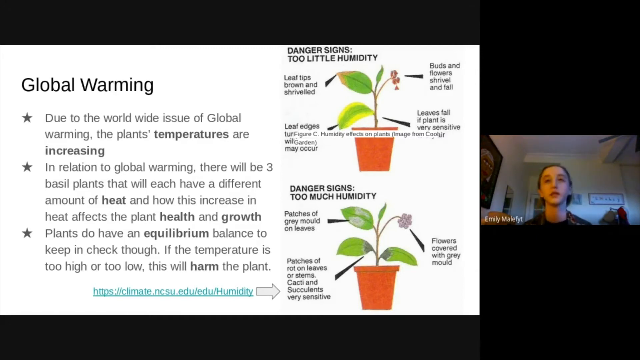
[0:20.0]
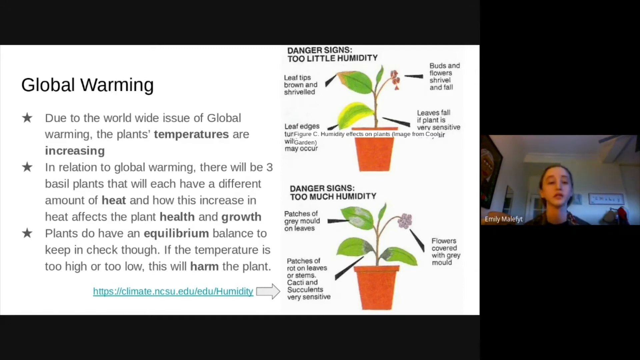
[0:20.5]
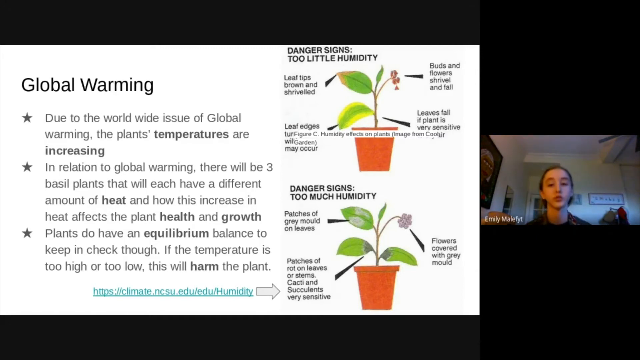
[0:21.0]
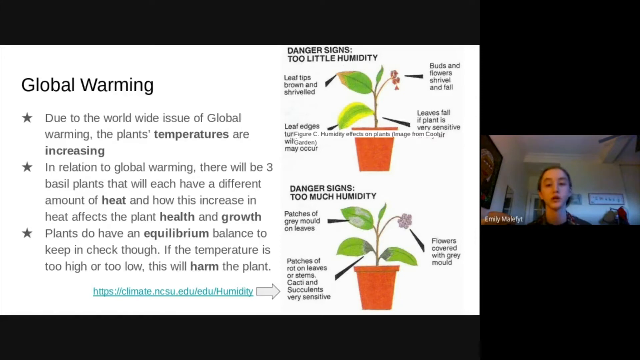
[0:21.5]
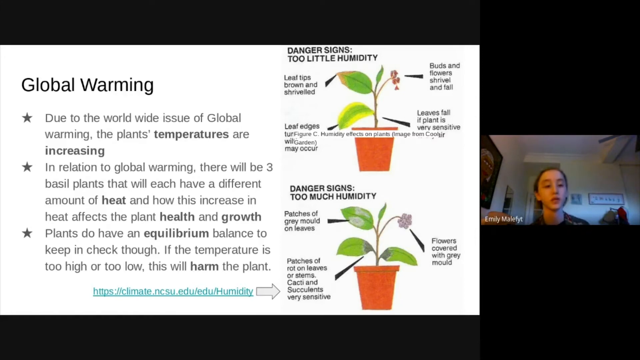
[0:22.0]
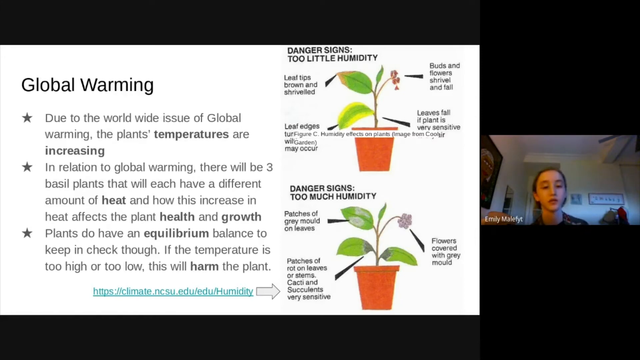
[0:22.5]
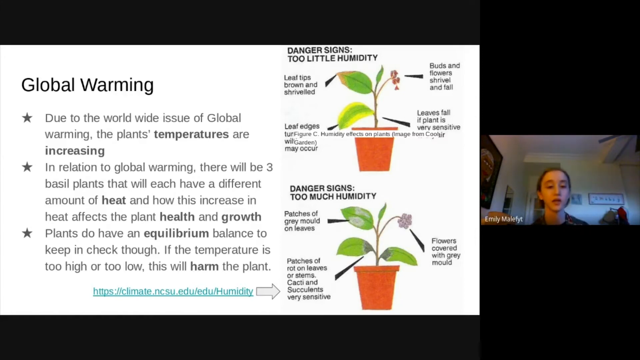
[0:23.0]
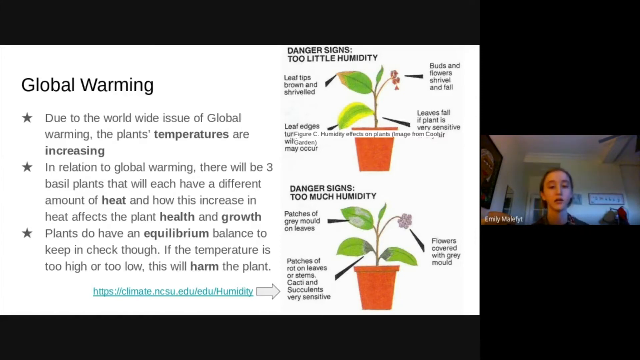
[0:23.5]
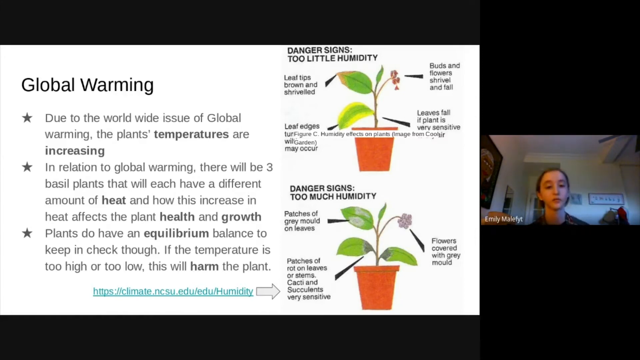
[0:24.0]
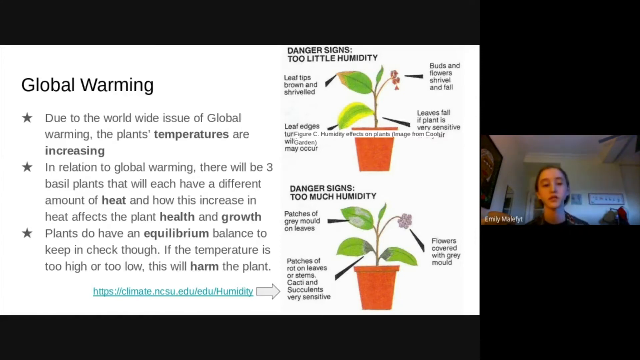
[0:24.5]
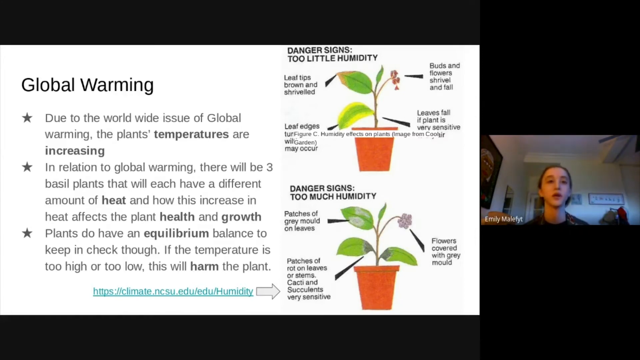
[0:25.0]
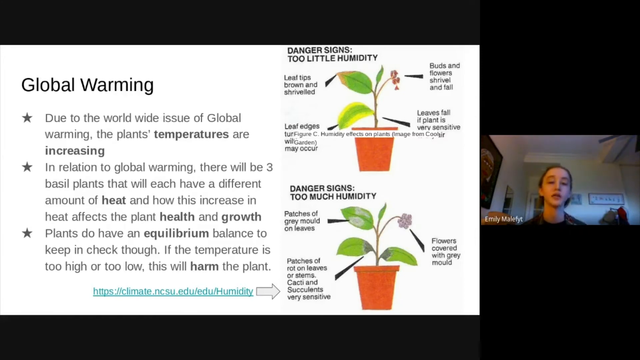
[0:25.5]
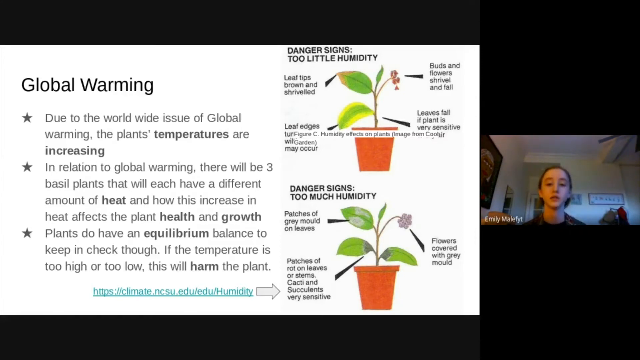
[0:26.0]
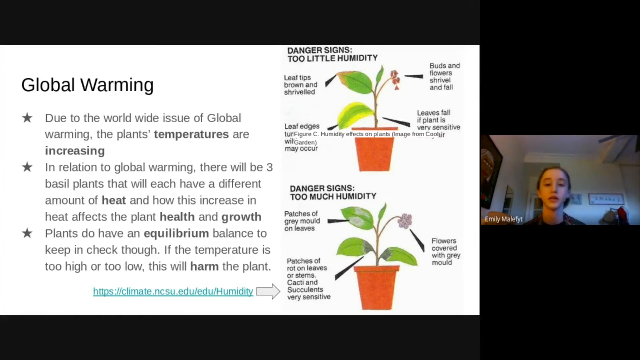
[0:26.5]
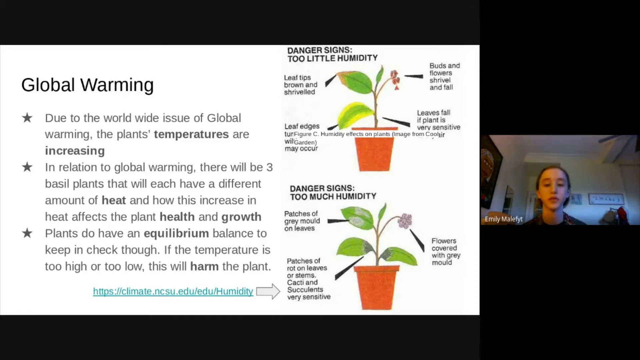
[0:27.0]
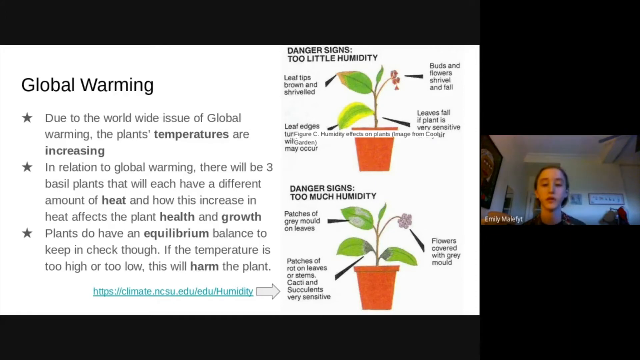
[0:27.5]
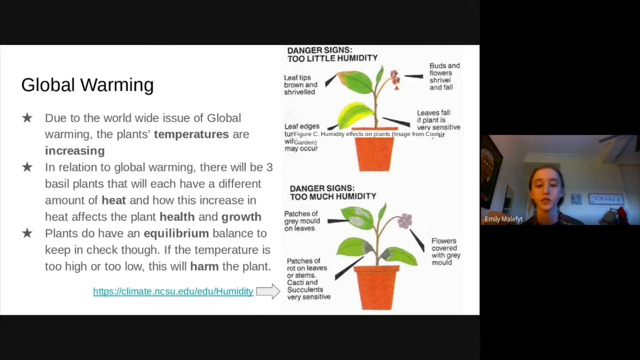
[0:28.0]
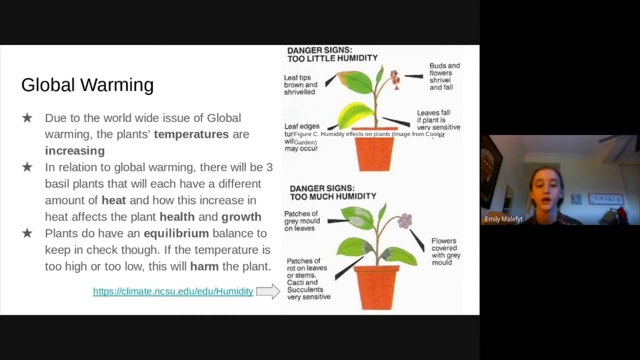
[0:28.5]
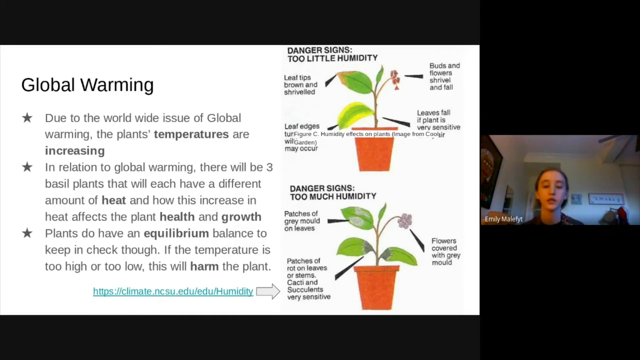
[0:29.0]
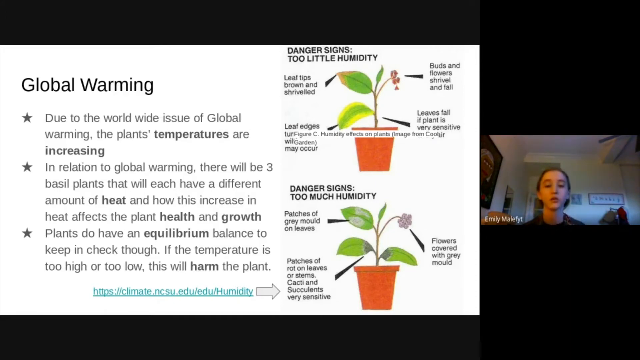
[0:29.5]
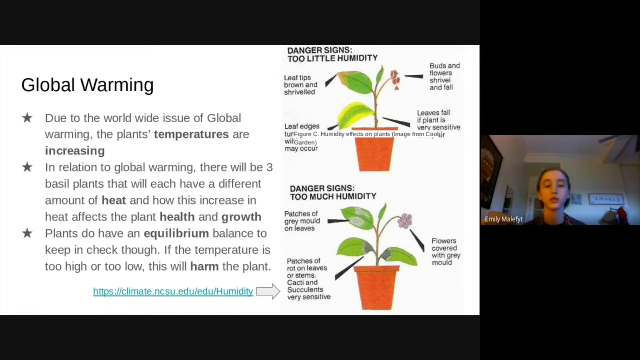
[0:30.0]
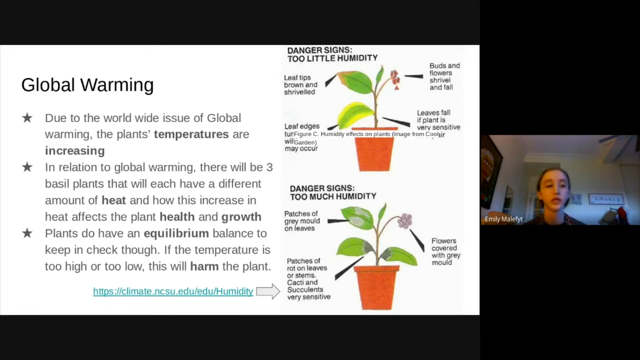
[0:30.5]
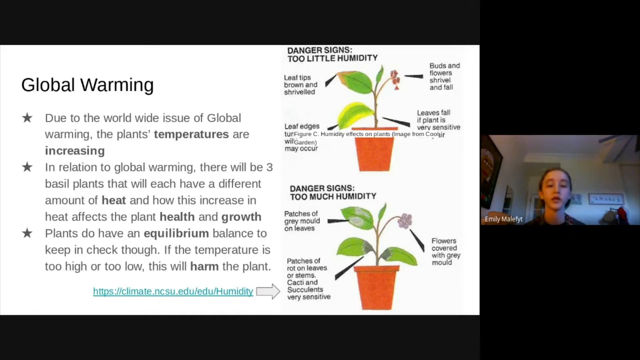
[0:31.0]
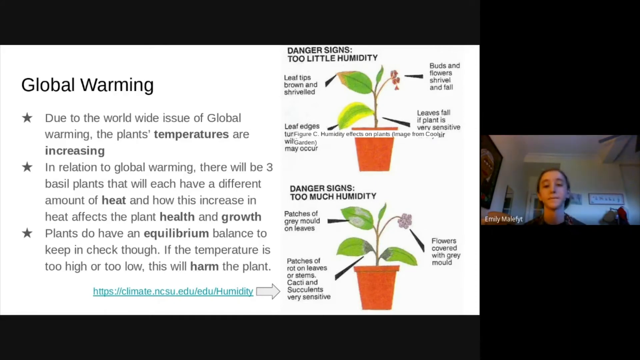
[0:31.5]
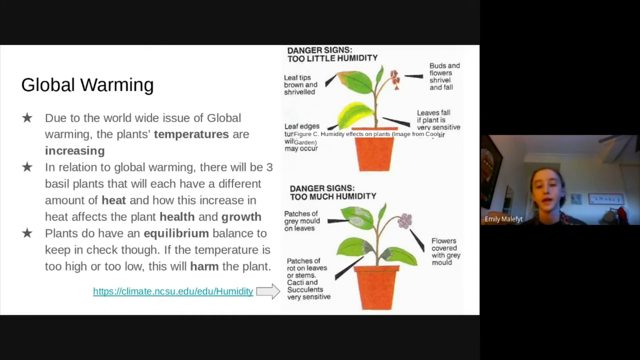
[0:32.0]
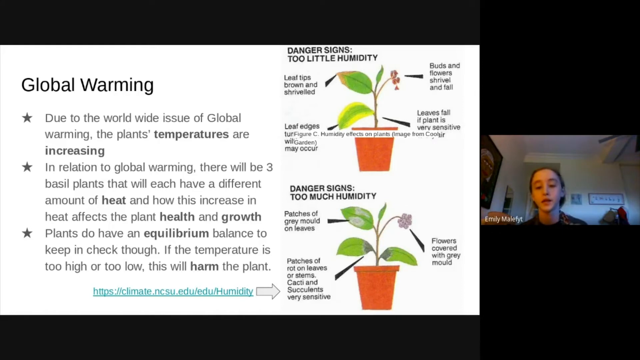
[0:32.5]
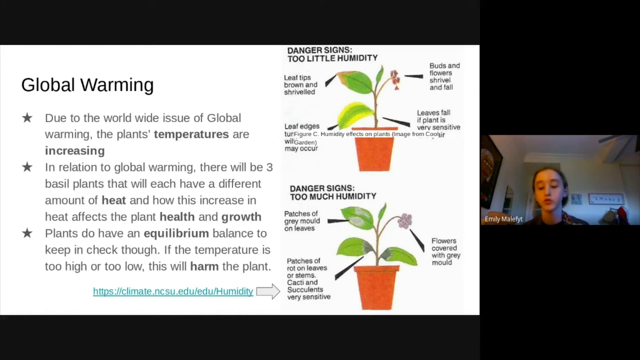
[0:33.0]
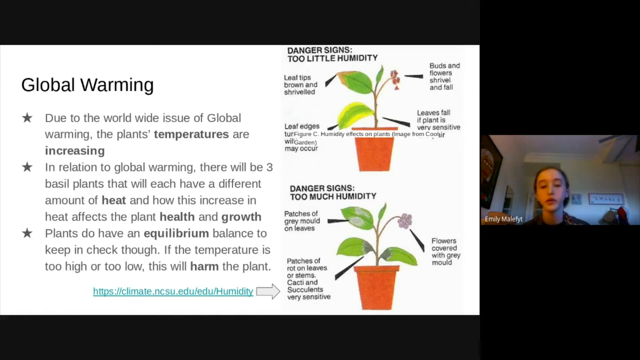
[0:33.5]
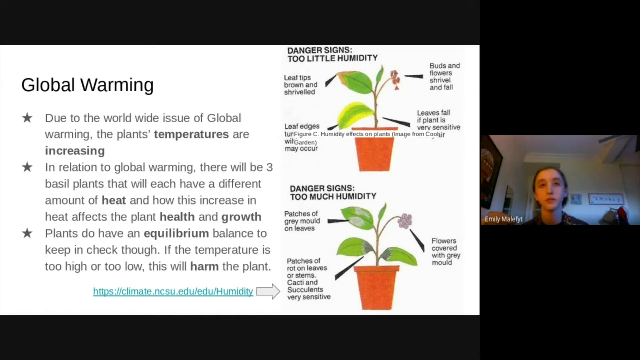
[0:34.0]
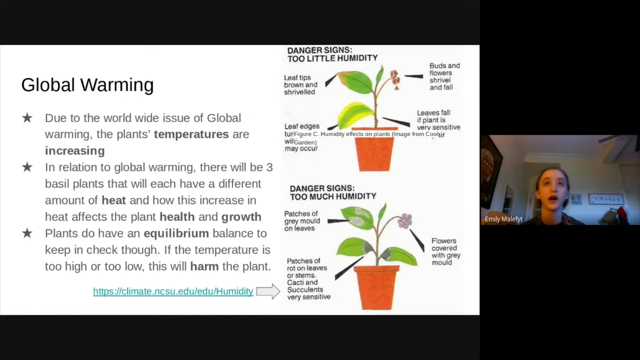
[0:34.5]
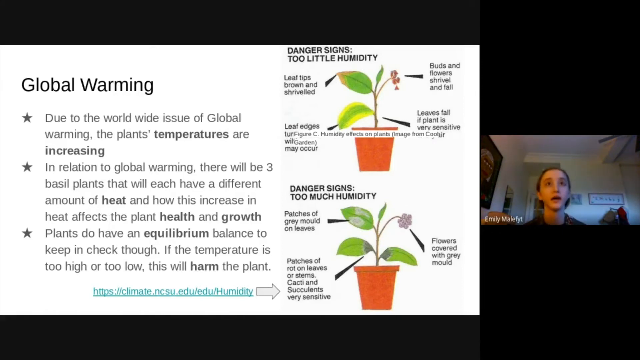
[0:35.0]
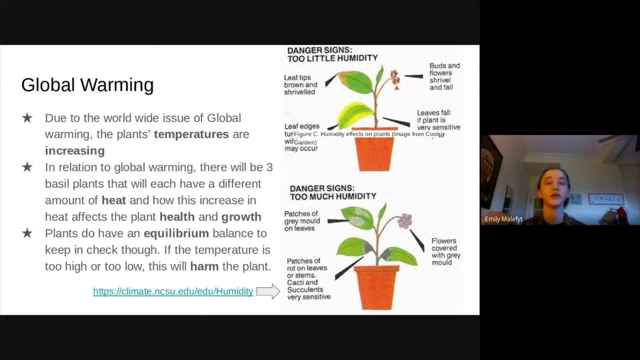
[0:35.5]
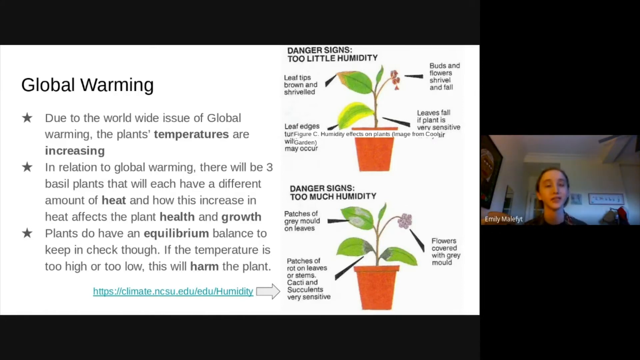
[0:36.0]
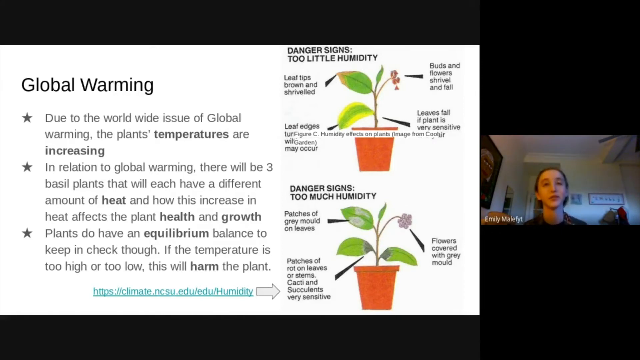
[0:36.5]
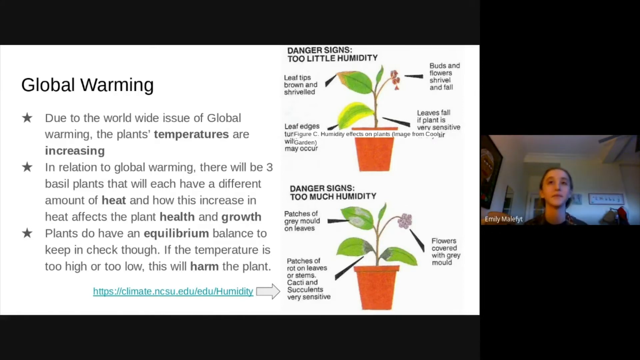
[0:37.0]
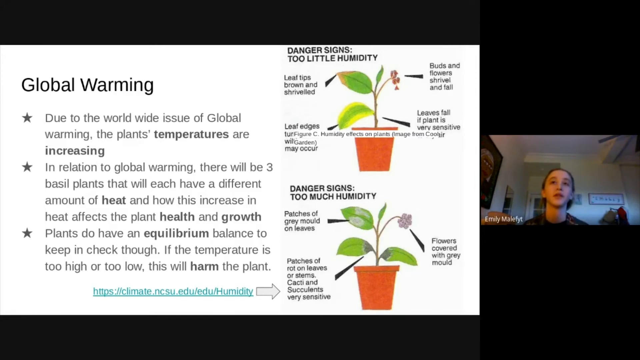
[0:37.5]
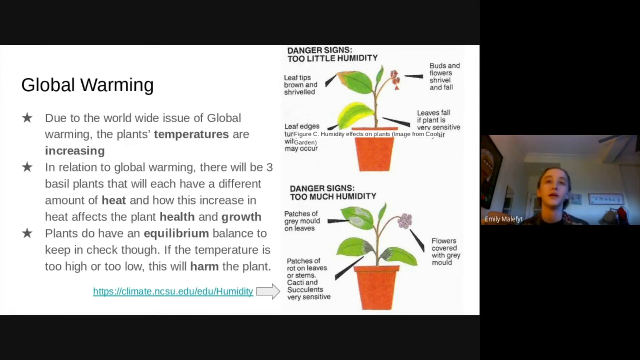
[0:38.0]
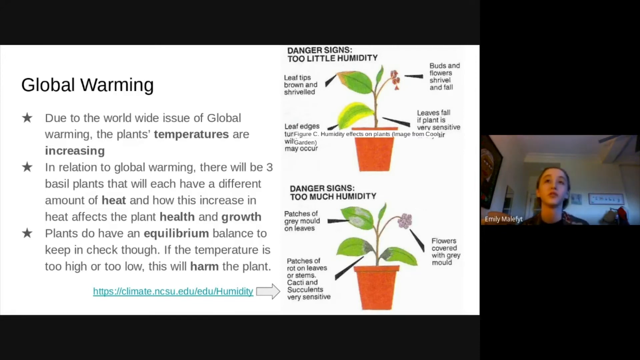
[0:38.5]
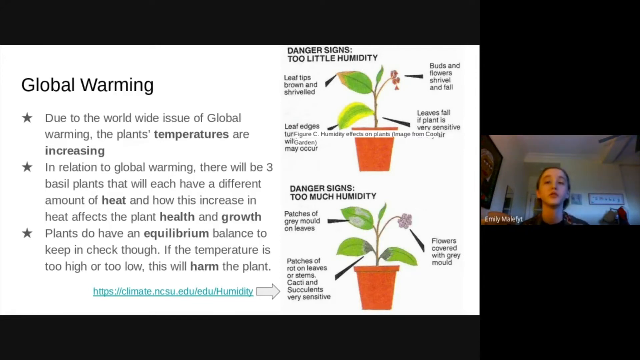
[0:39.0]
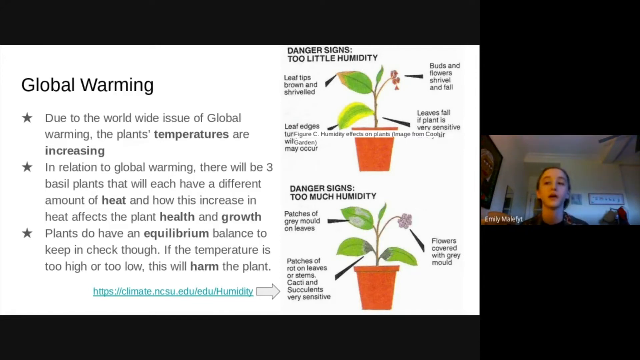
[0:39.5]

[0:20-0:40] Emily continues to speak at the side; she is sitting in a small room, with the ceiling in view from the camera. The diagrams show that with too little humidity, the leaf tips brown and shrivel, leaves may fall, and buds and flowers shrivel and fall, and that with too much humidity there might be molds on the leaves and signs of rotting. On the left of the diagram labeled too much humidity, an arrow points right toward the text, and attached to the arrow is a website linking to a webpage about humidity on climate.ncsu.edu. The slide is white, the points have stars next to them, and the plants in the diagrams are in a brown pot, with a few leaves stemming from it and some flowers as well.